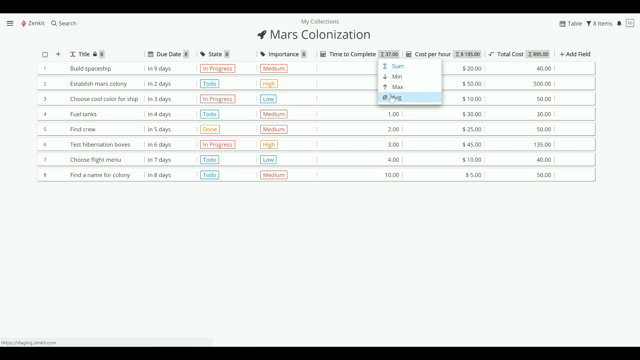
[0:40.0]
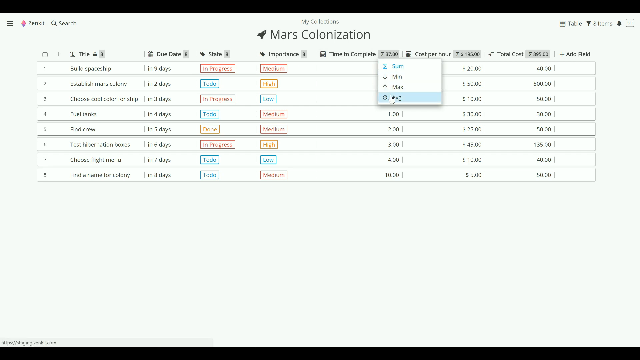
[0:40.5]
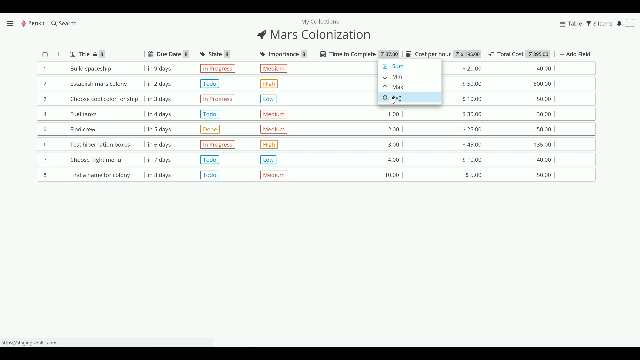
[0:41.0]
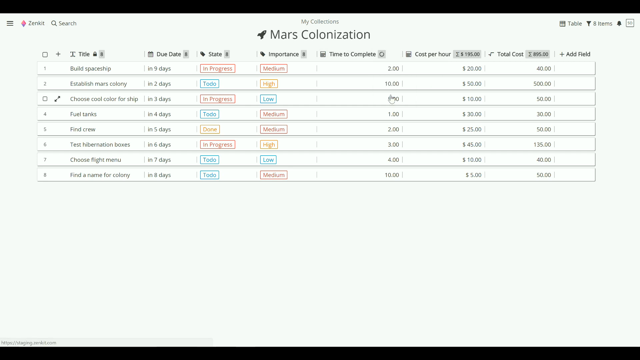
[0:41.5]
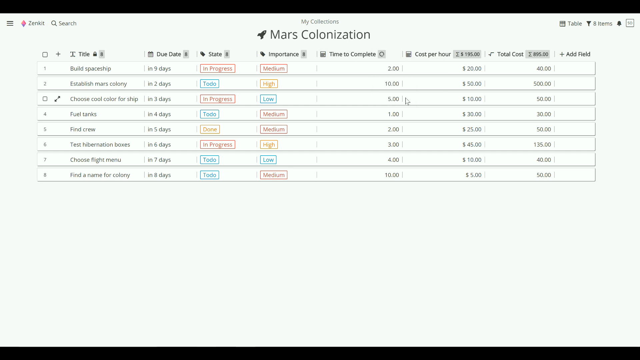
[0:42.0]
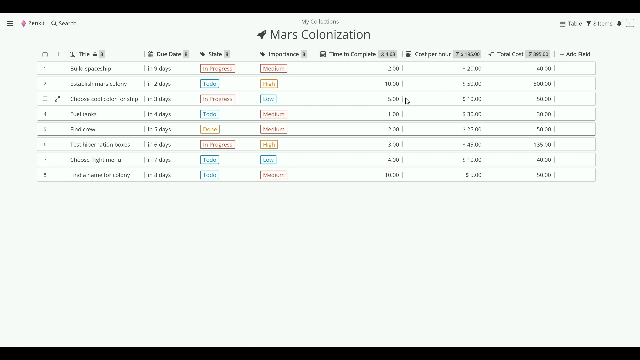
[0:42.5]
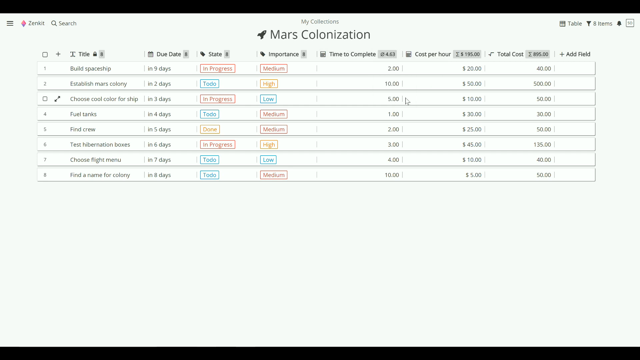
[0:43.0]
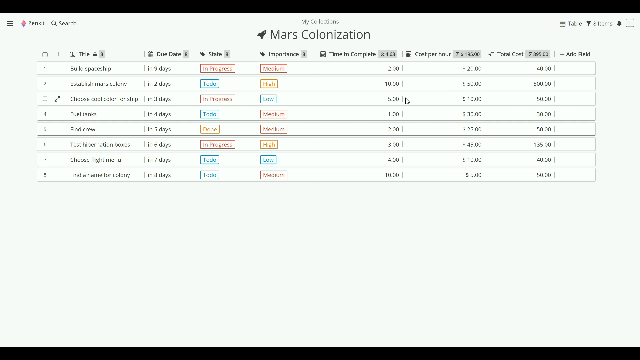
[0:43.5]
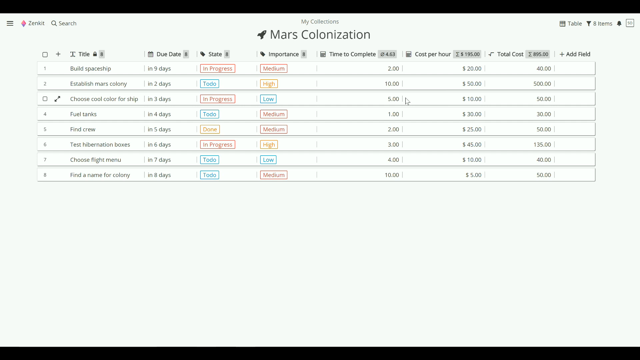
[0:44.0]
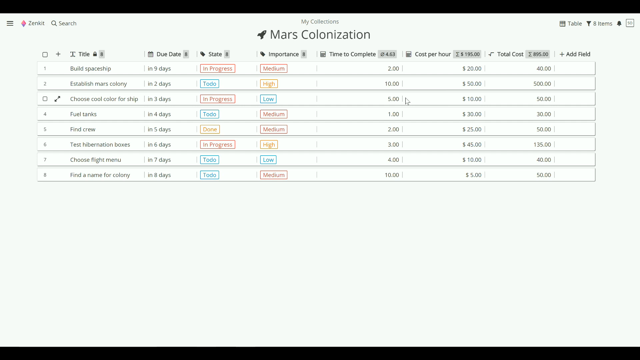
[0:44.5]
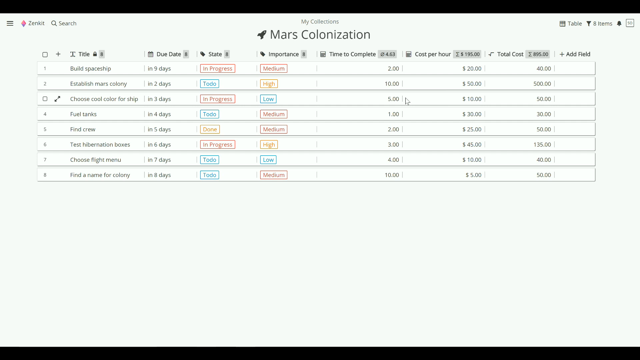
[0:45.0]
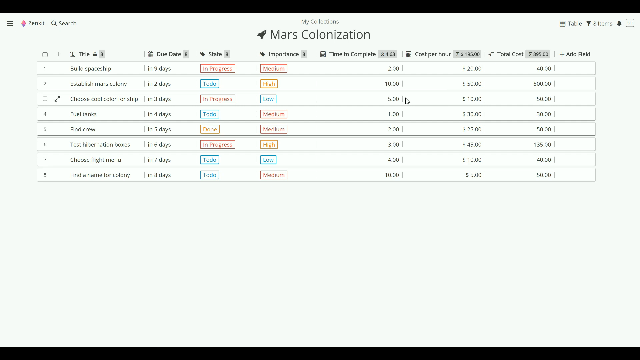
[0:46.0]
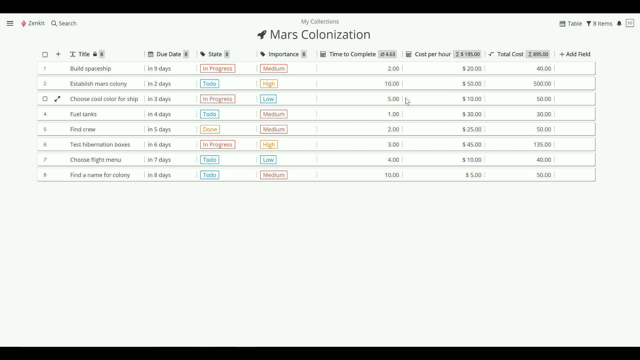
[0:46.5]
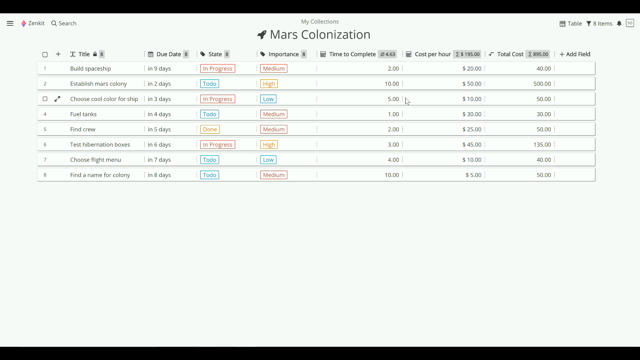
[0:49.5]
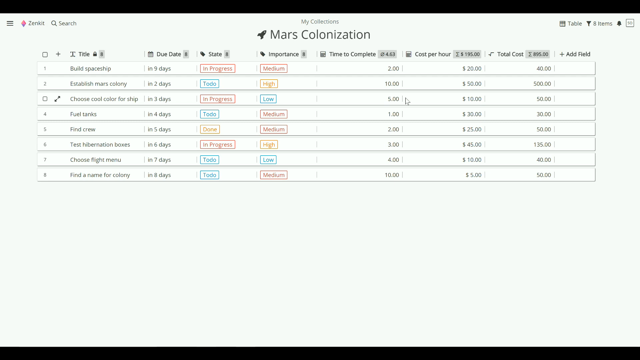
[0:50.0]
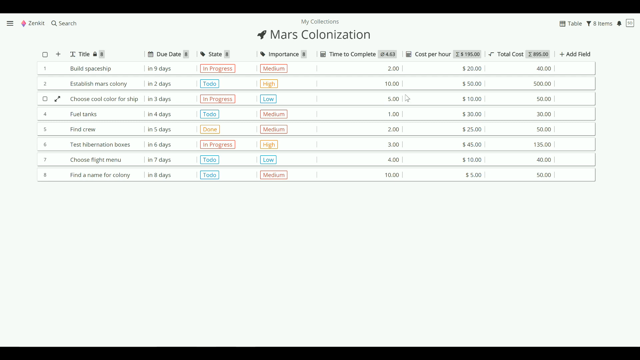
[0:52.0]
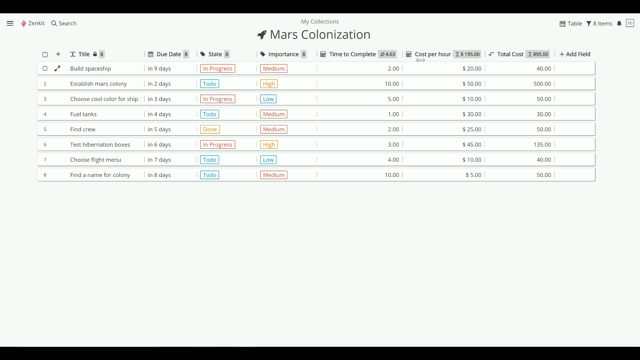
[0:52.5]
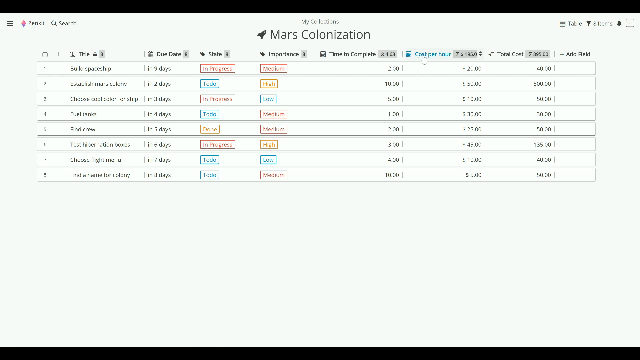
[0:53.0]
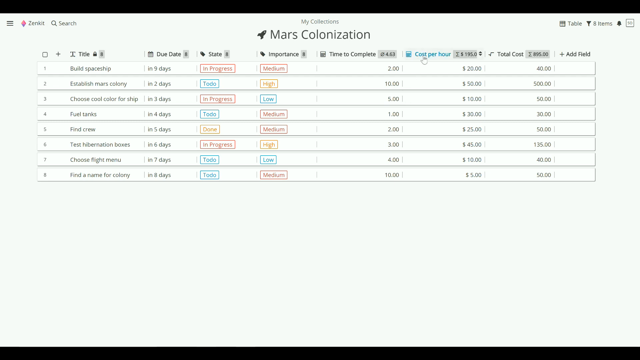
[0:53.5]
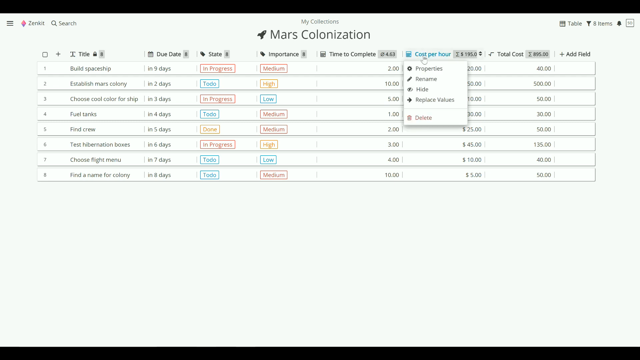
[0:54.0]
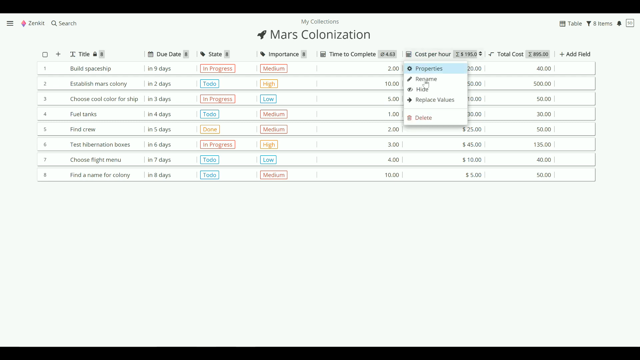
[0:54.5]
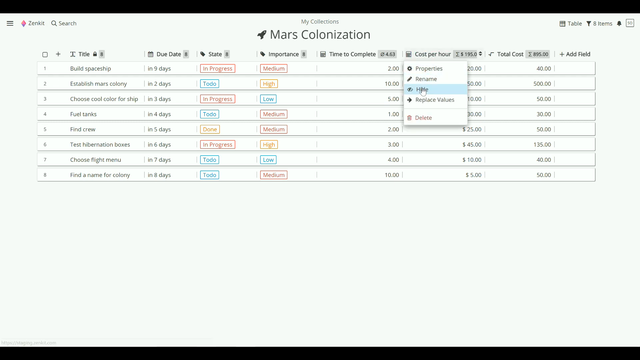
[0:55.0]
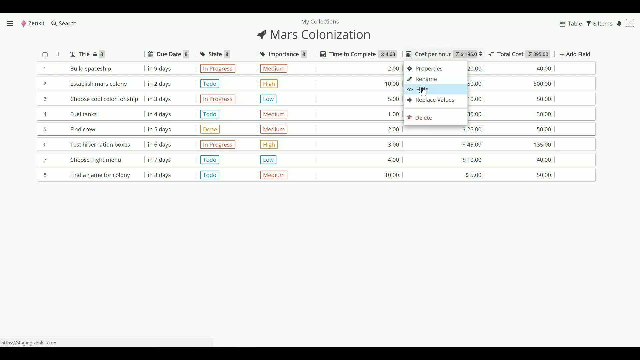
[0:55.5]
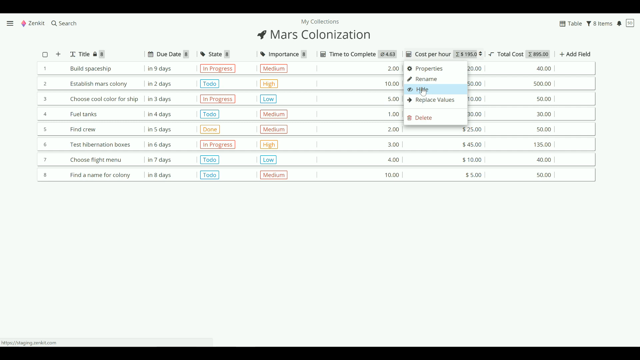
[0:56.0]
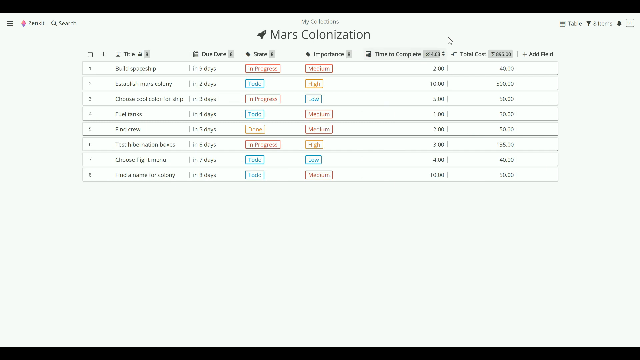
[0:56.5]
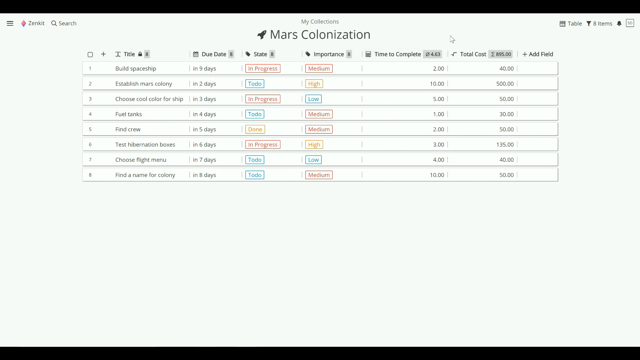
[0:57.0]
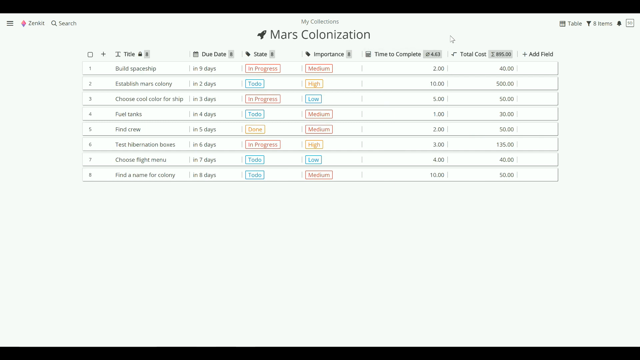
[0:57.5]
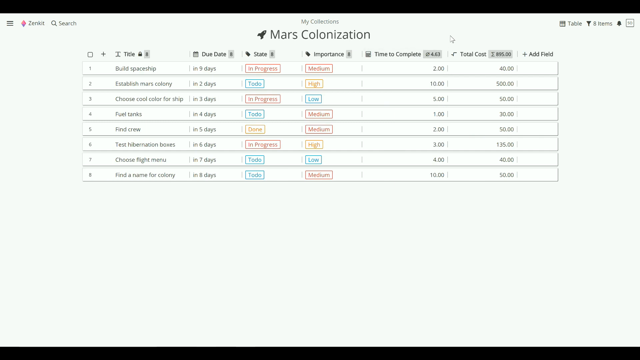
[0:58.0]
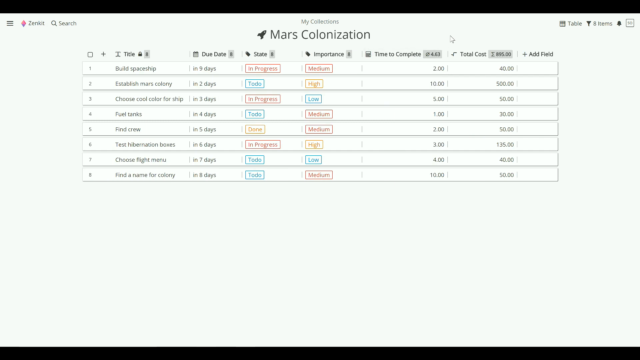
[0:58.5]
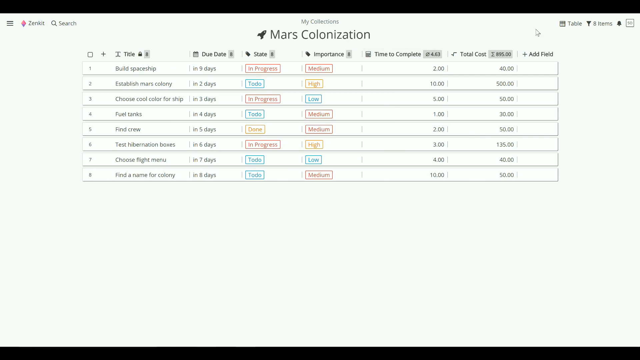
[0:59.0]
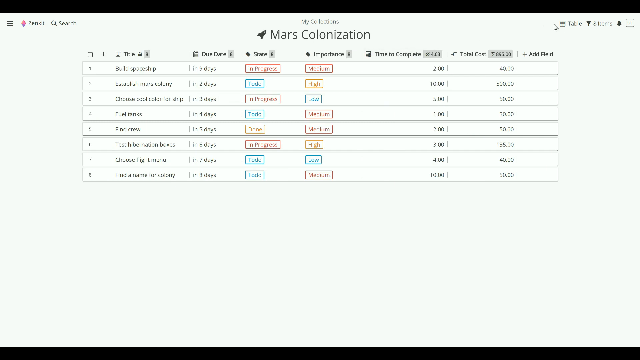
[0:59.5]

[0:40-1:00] The user clicks the numbers next to the time to complete heading, which opens a menu with options to sort by min, sort by max, and two other options. The mouse pointer then hovers still over one of the rows, apparently the "Choose Cool Color for Ship" row. Next the mouse clicks the number next to cost per hour, bringing up options including "Properties", "Rename", "Hide" and "Replace Values". The user selects Hide, and the whole table becomes a little narrower with that column now hidden.